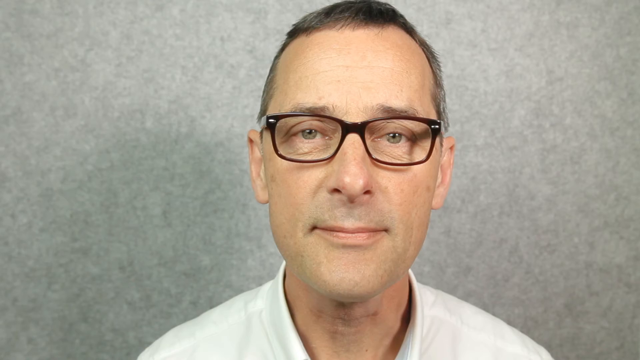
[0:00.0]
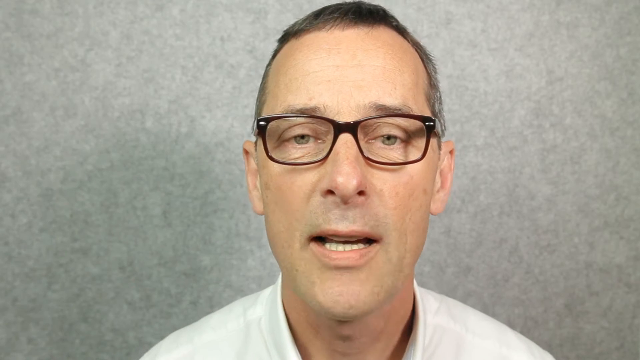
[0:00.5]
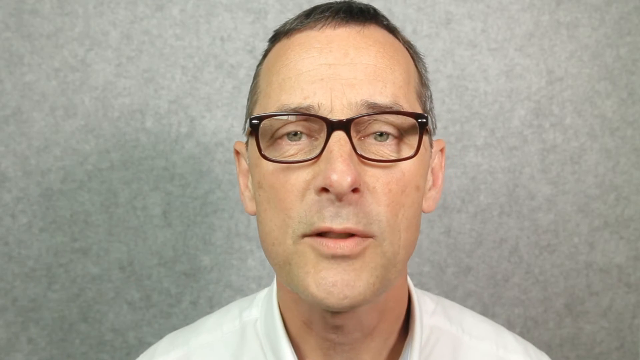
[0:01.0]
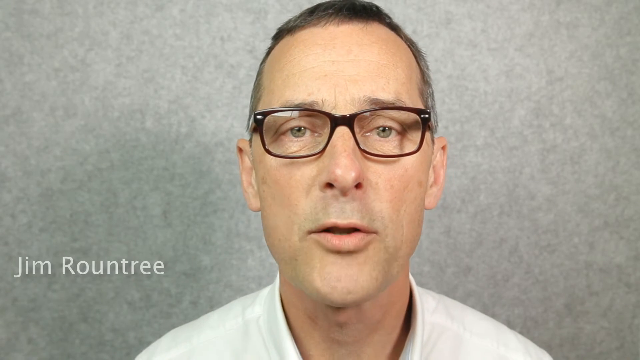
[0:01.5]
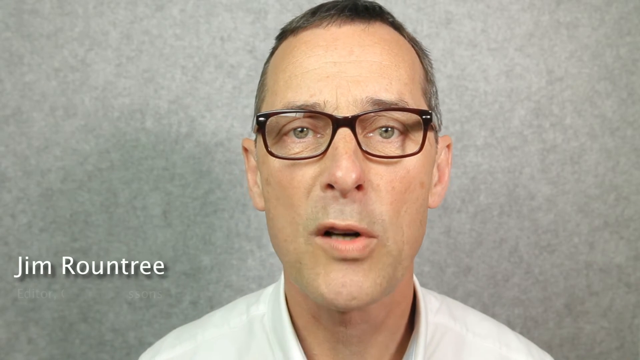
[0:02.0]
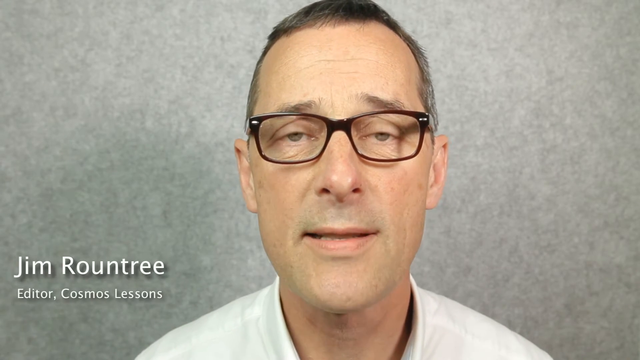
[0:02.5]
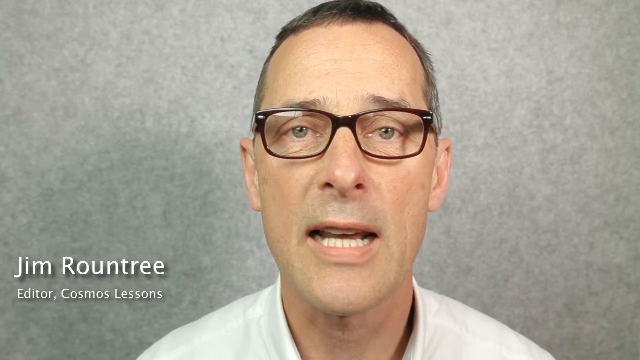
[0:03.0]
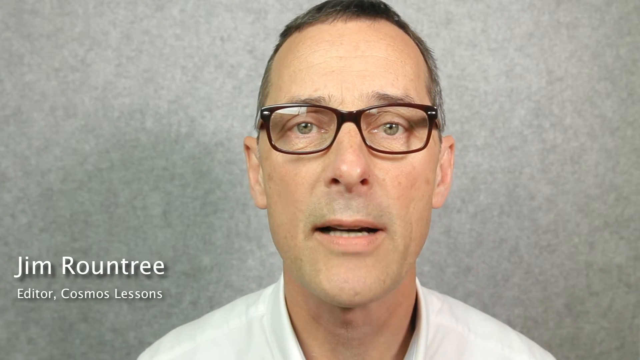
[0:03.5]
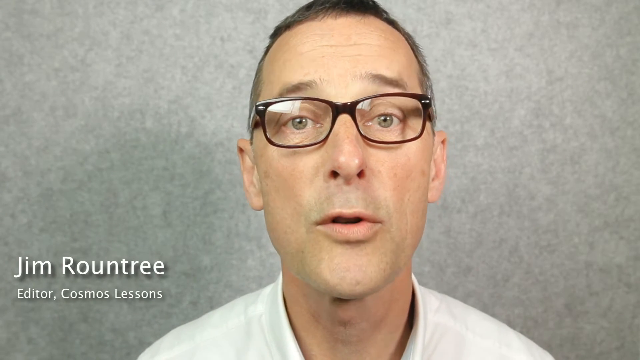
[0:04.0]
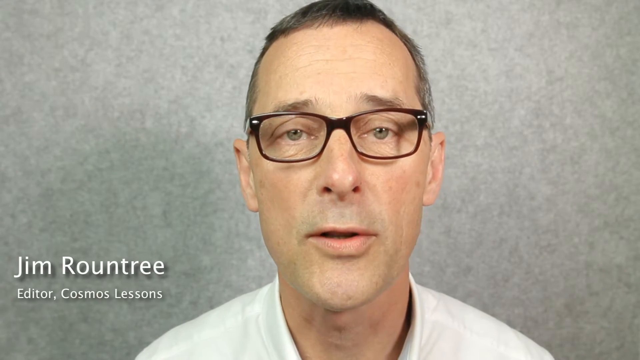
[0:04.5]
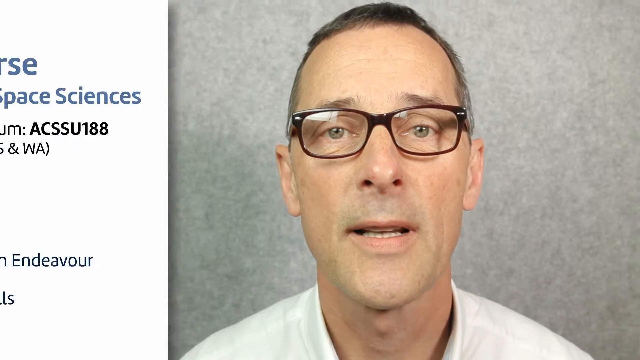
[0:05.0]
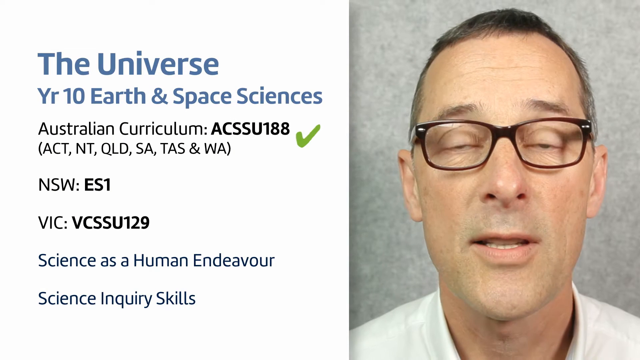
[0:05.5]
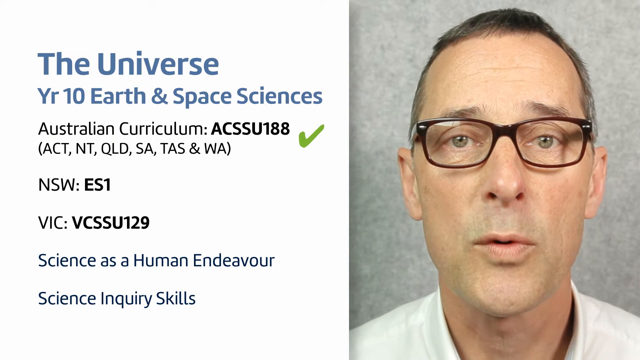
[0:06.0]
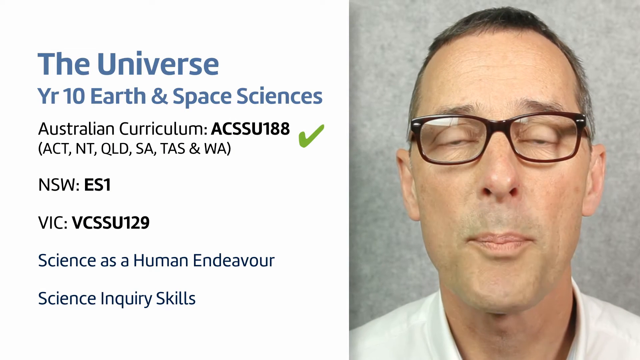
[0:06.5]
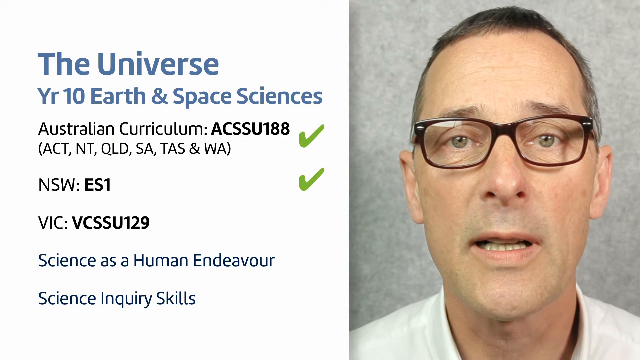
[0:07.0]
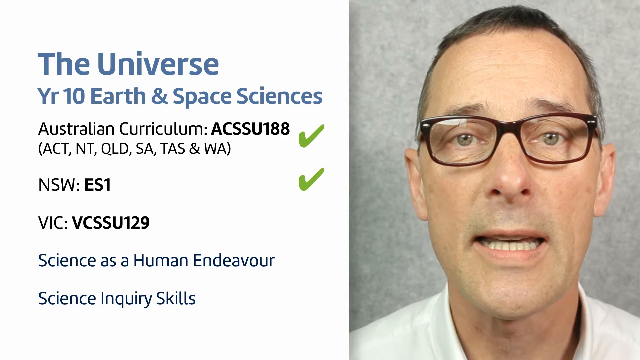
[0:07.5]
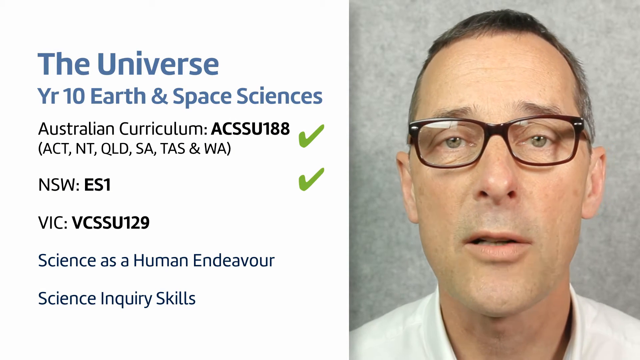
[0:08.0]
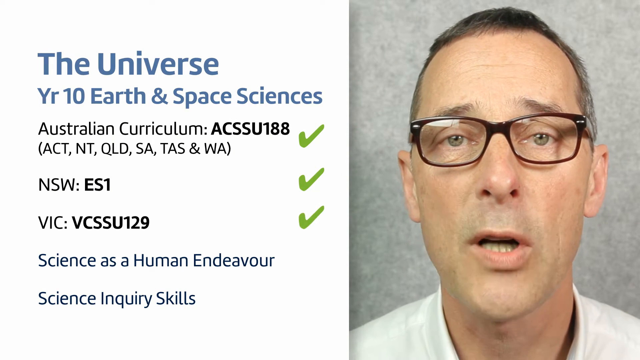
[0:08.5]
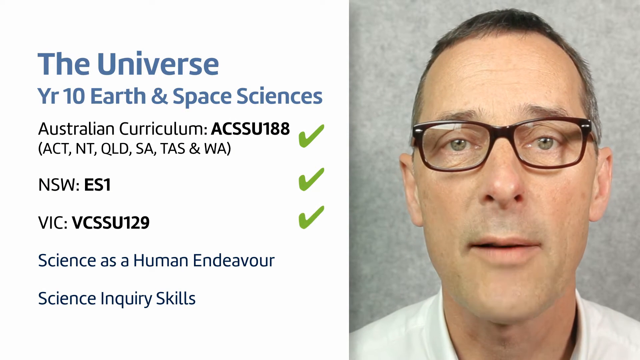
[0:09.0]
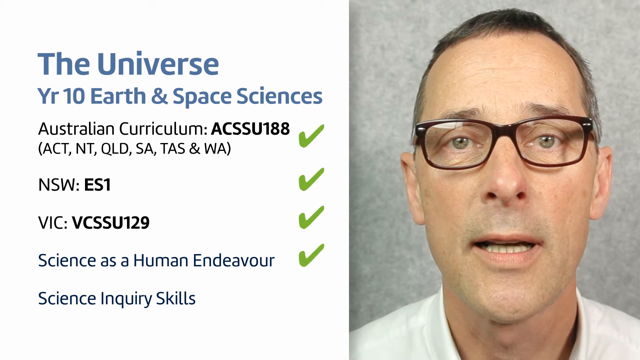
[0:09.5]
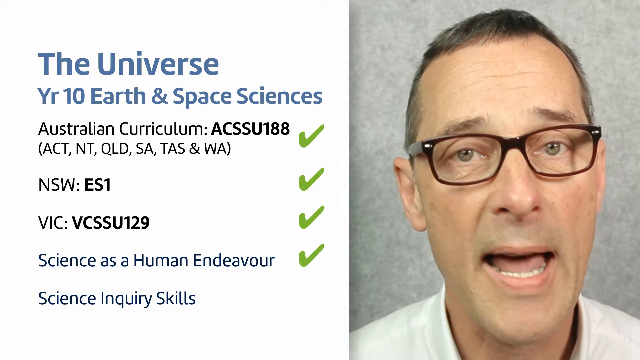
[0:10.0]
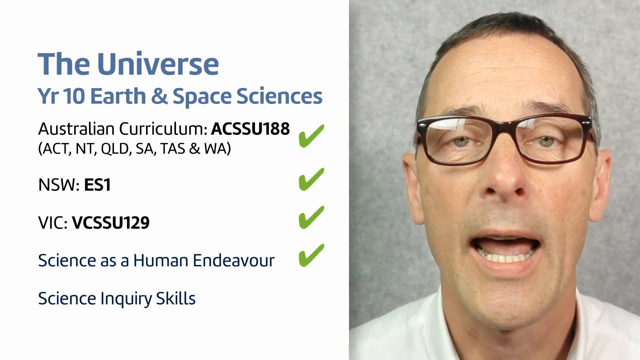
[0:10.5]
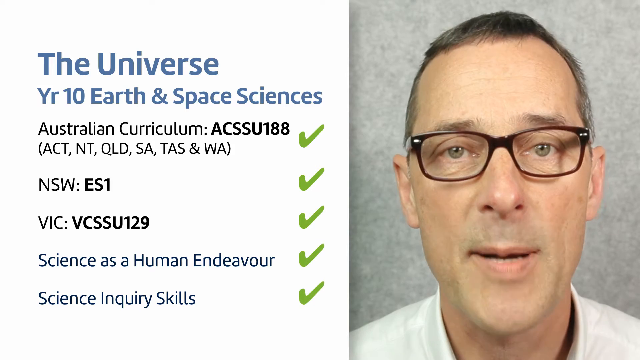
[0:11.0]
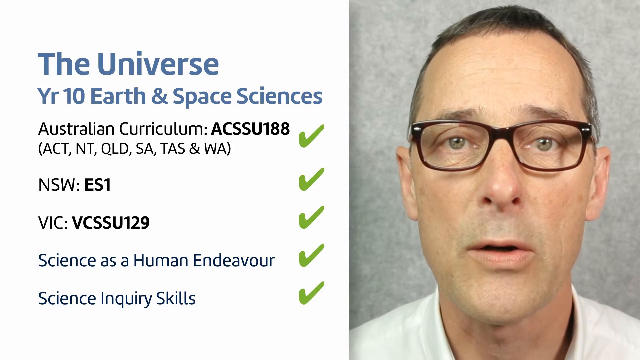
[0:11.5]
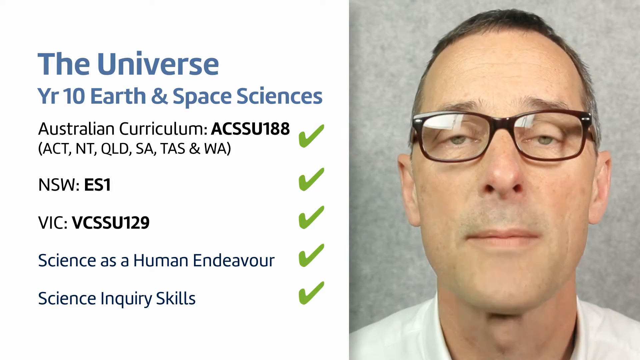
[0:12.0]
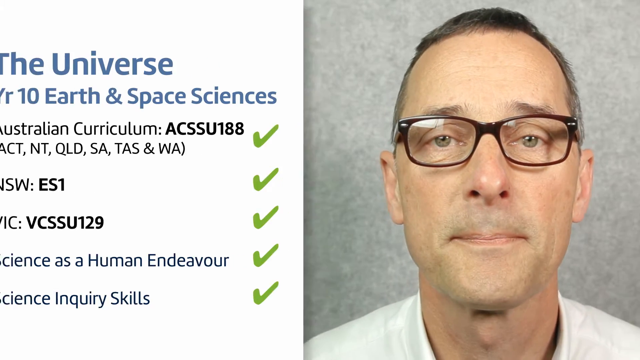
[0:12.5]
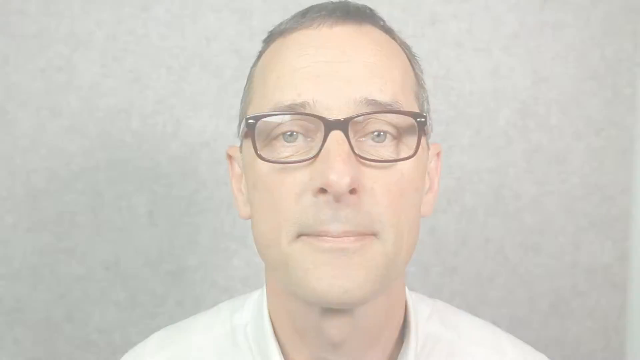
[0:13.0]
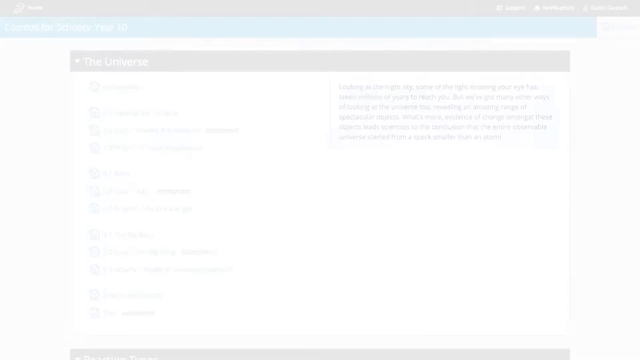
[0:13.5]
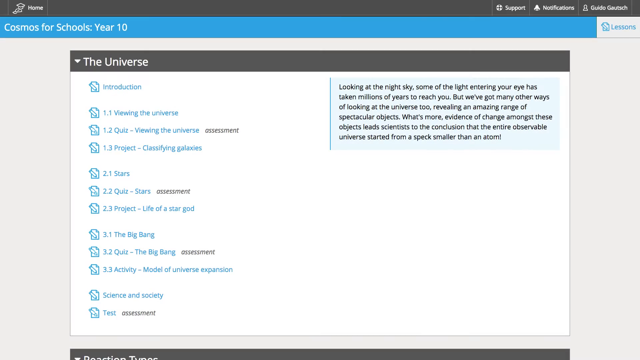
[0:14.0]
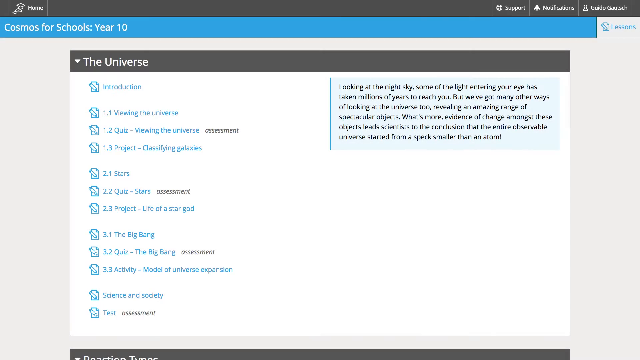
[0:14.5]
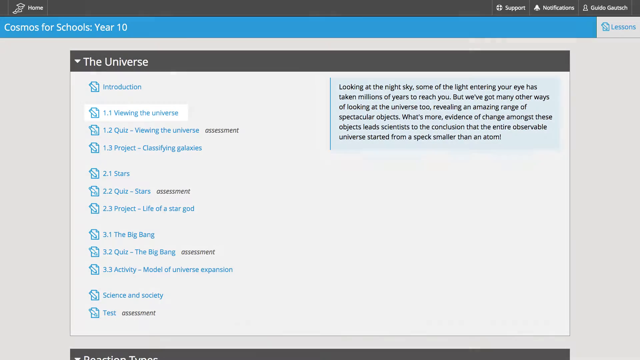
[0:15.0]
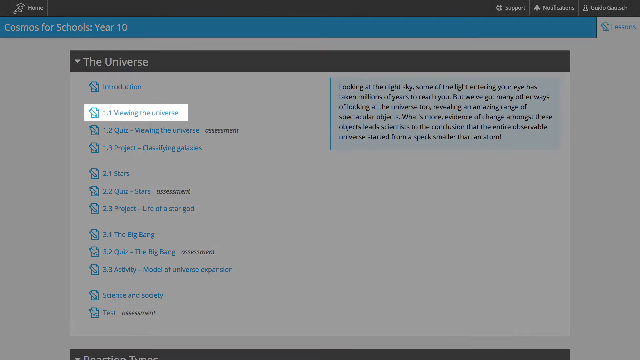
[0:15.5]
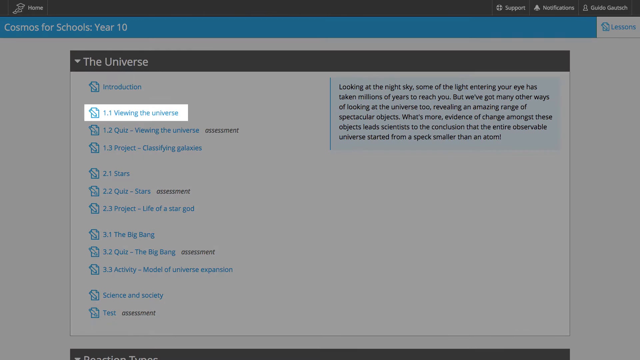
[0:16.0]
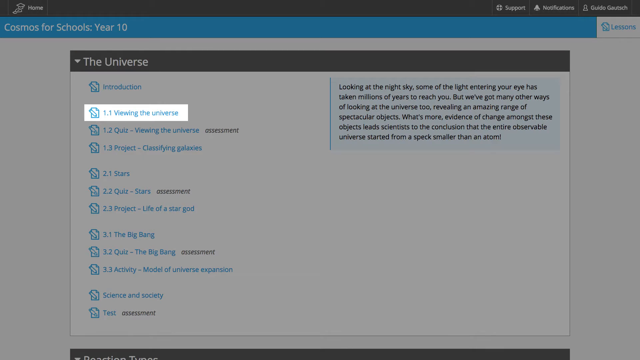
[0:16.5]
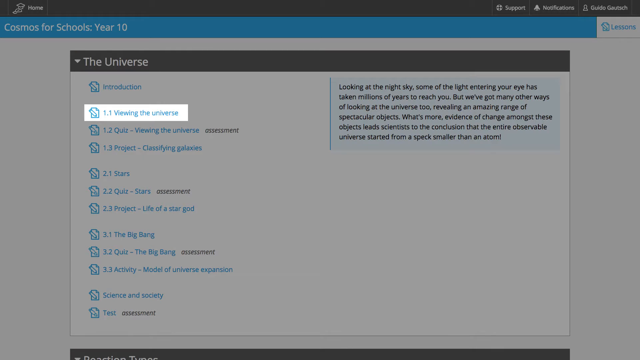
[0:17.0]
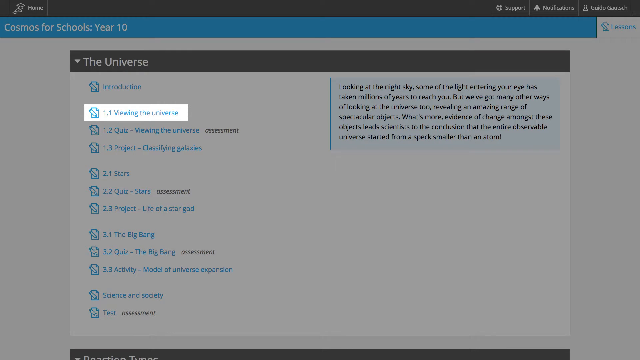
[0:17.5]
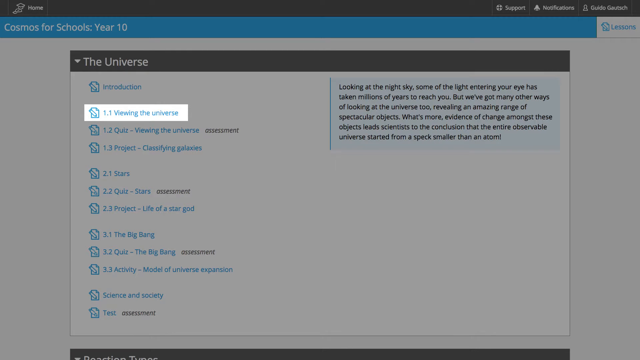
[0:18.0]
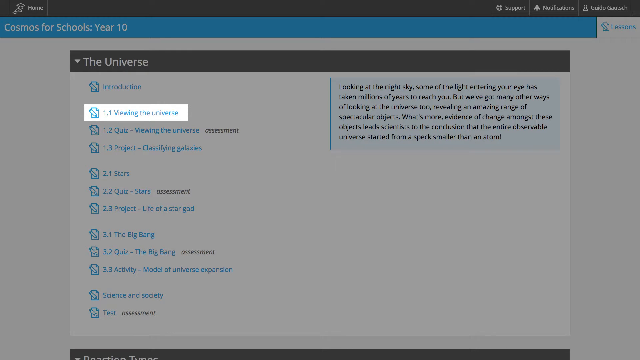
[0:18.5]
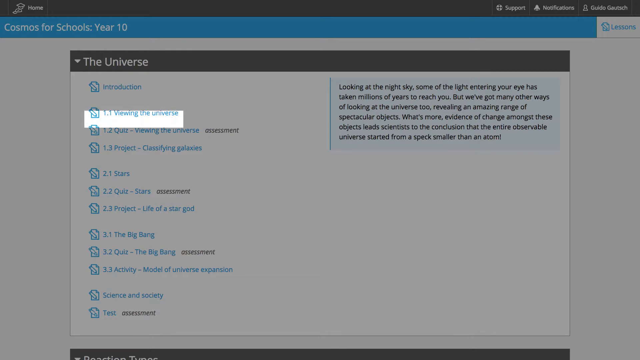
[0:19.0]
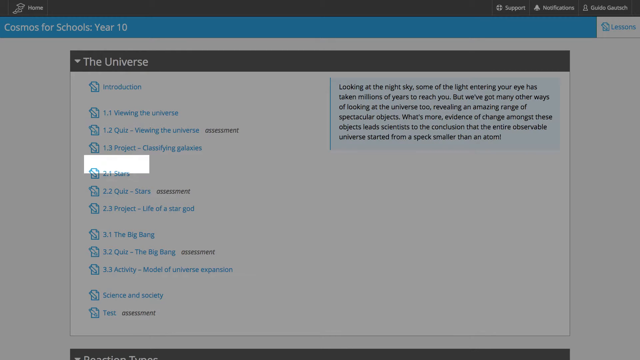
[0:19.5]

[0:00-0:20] A man with glasses is talking in front of a very simple grey background; he is named Jim Roundtree, an editor of Cosmos Lessons, and is probably a professor. On the left side, a number of items pop up about the course he apparently teaches, called The Universe, Year 10, Earth and Space Sciences. It is an Australian curriculum covering science as a human endeavor and science inquiry skills. A number of check marks pop up as well. A list then appears of the different parts of the course to be taken throughout the semester, which looks like an overview of the class. One item appears to be viewing the universe as an introduction, followed by different assessments and classifying.